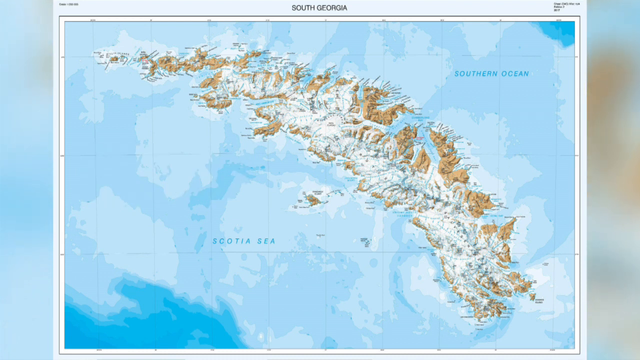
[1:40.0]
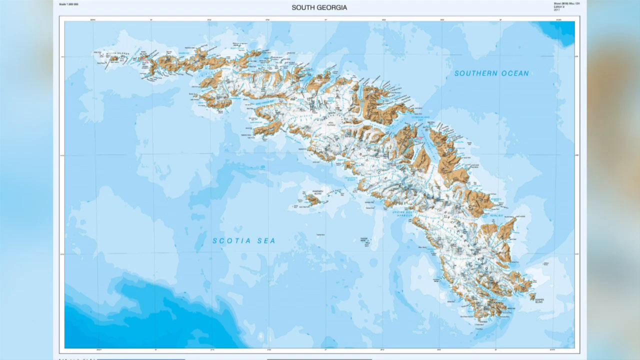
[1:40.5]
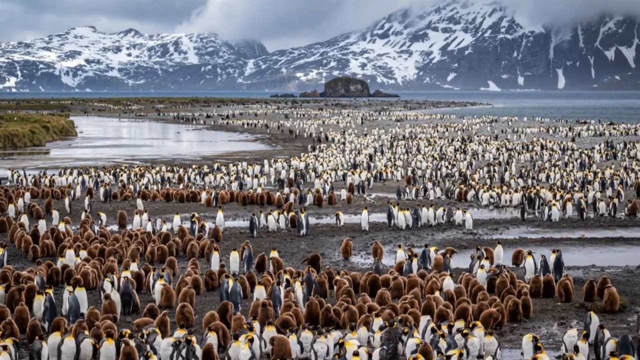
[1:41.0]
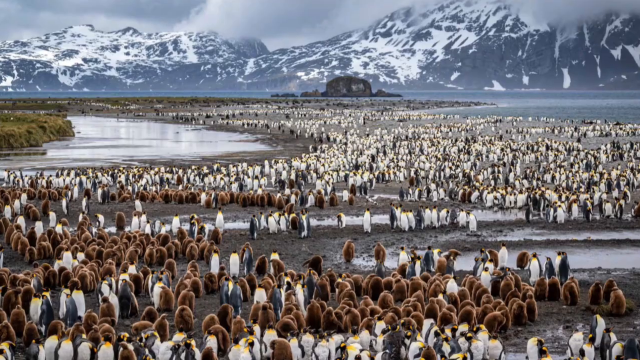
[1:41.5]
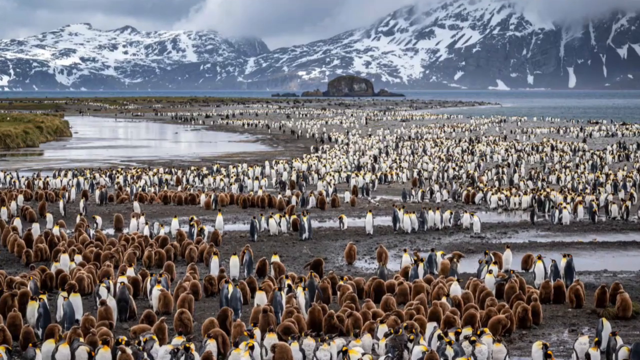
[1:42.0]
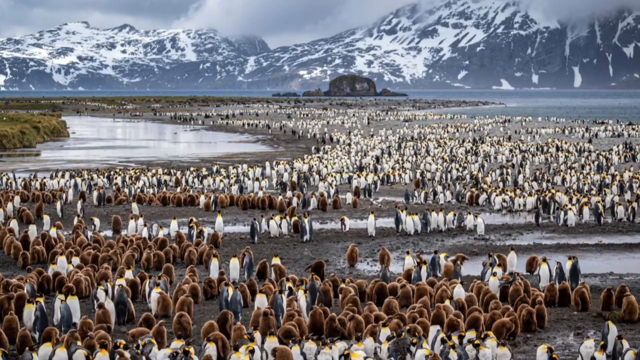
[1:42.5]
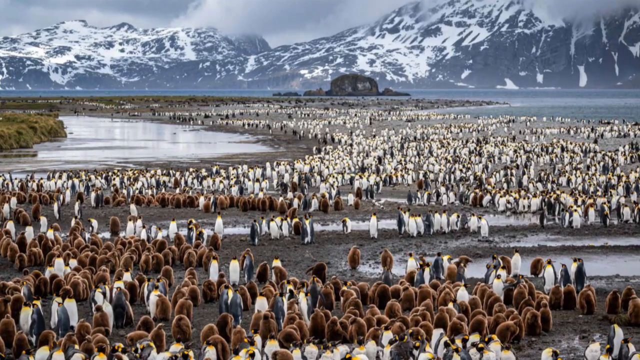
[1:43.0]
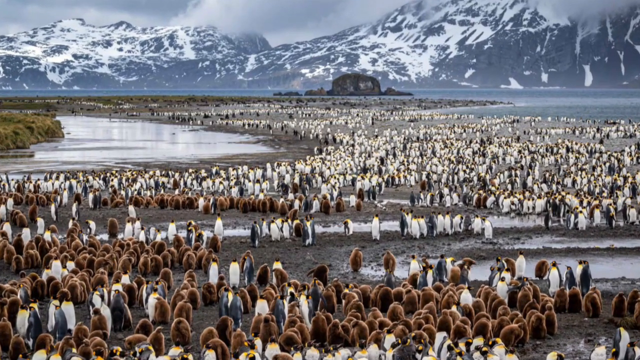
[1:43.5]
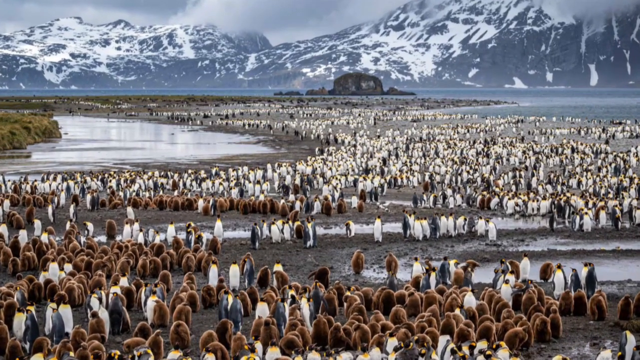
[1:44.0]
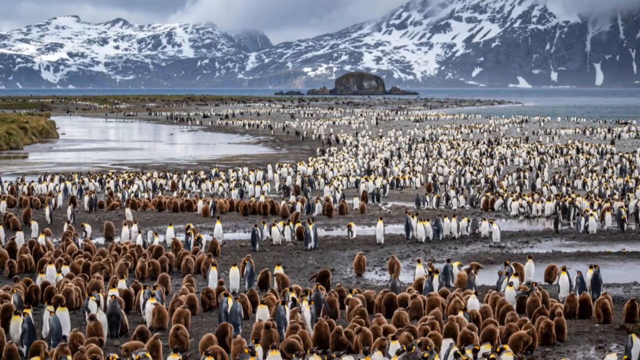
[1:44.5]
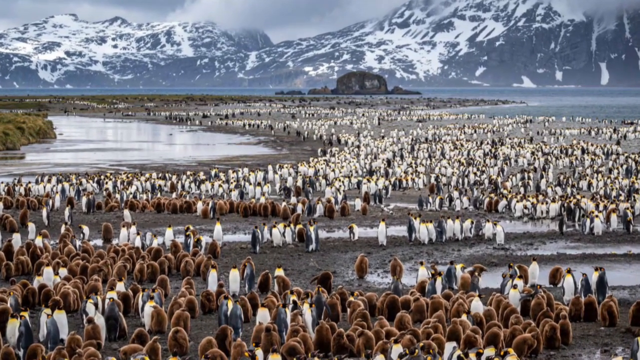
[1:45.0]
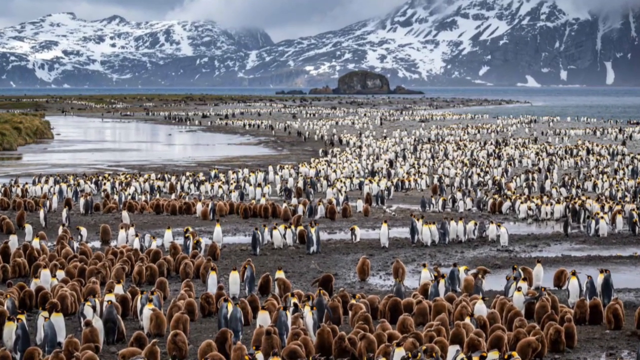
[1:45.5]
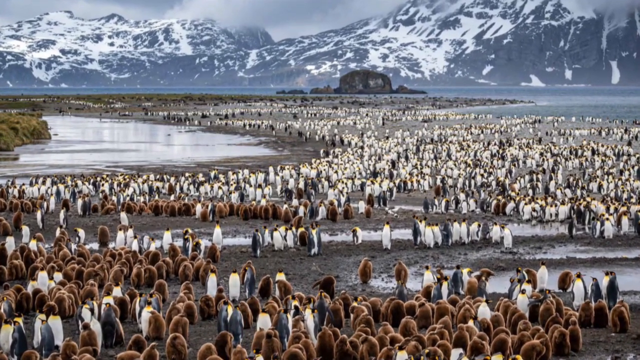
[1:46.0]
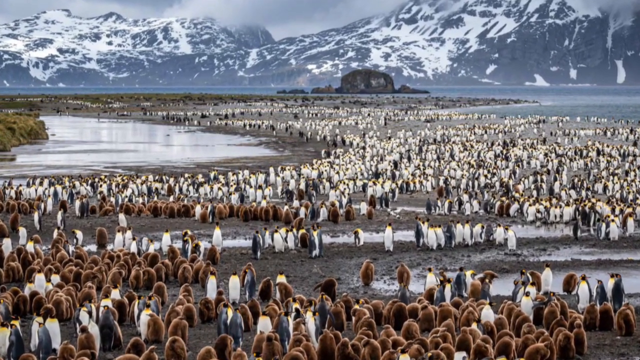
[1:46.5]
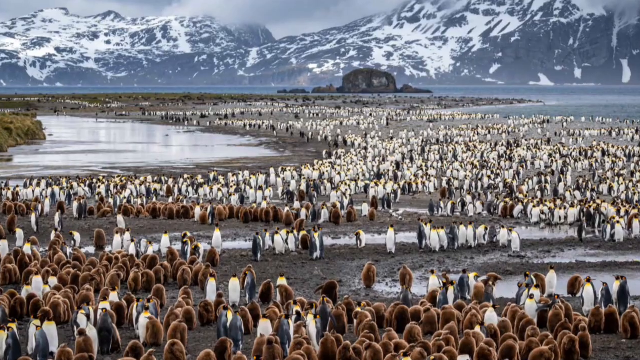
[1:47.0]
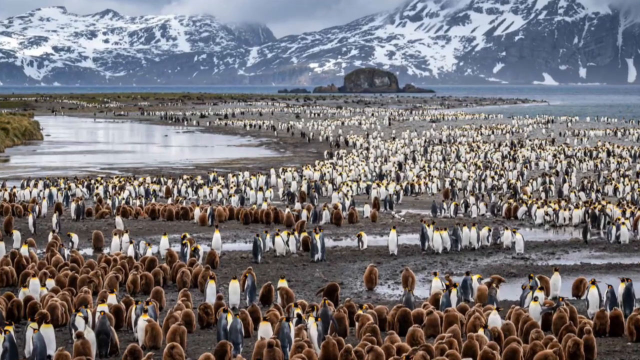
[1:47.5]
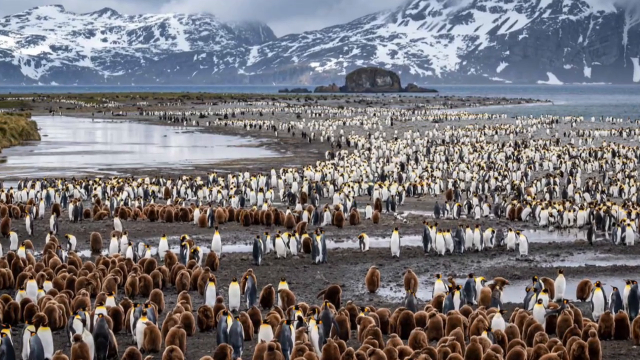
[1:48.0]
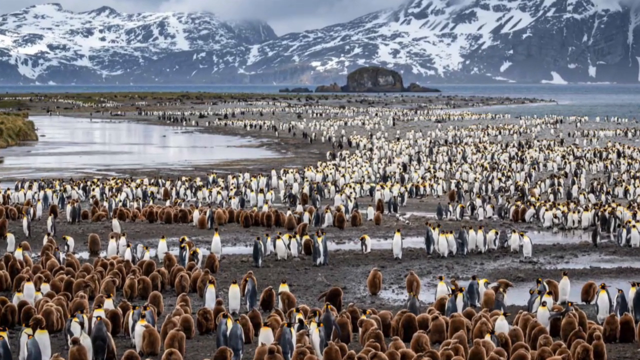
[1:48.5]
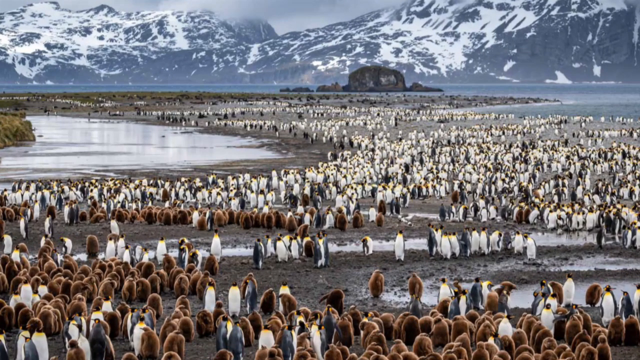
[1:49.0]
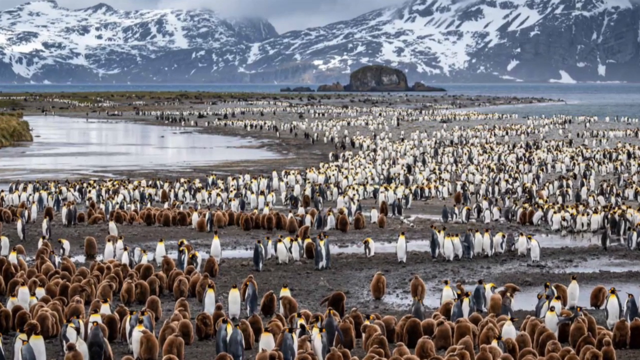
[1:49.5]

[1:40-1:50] An image shows a large group of penguins, apparently hundreds, standing on a large area of land with large puddles of water scattered around. There are snow-covered mountains in the distance, and the weather conditions look very cold. The image changes to several otters lying on small rocks in very lush, green surroundings with lots of greenery. The map titled "South Georgia" appears once again, with the words "Southern Ocean" and "Scotia sea" displayed on it. It is a very large map showing a large area of land surrounded by a large area of sea coloured blue.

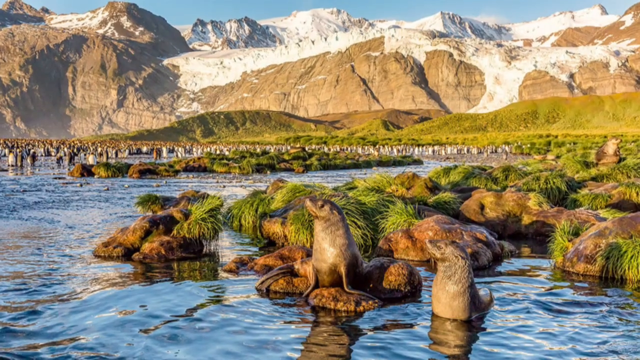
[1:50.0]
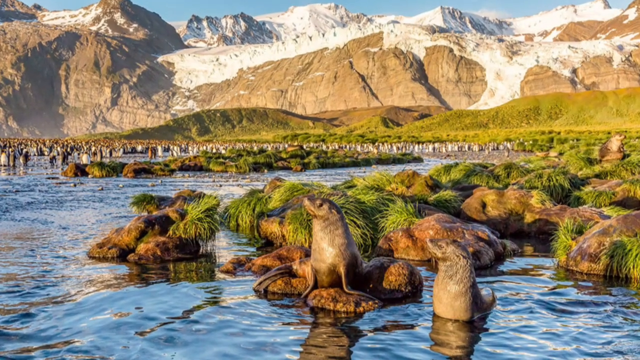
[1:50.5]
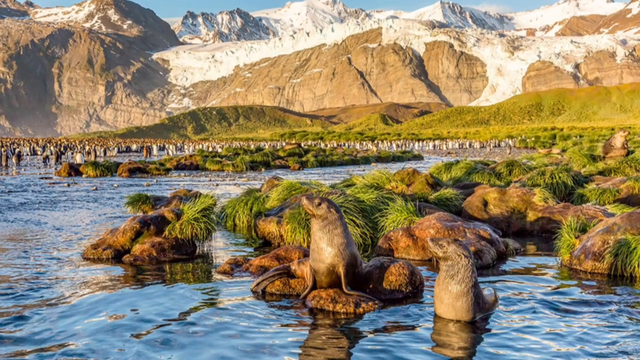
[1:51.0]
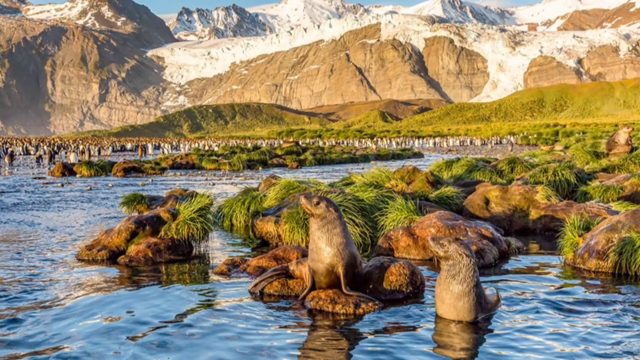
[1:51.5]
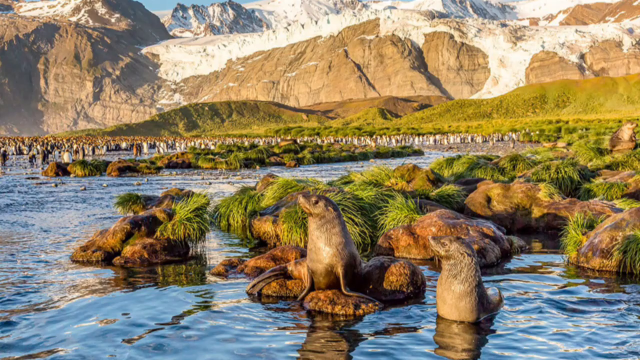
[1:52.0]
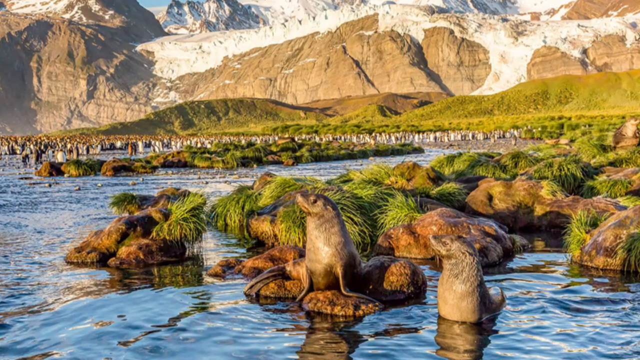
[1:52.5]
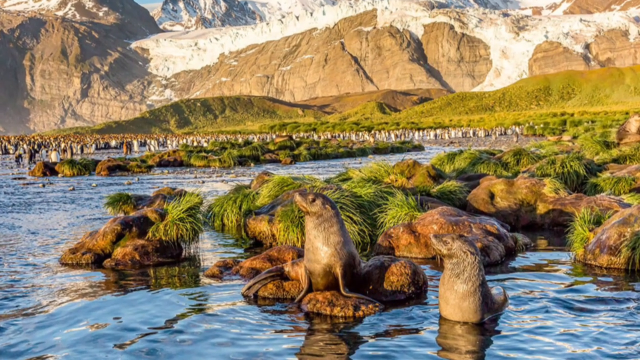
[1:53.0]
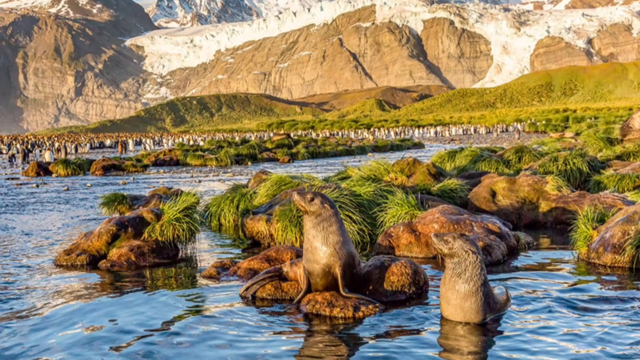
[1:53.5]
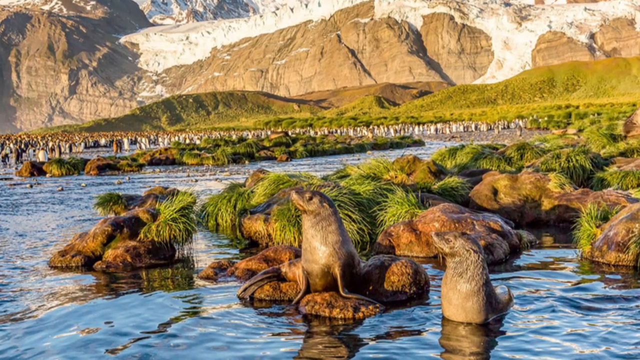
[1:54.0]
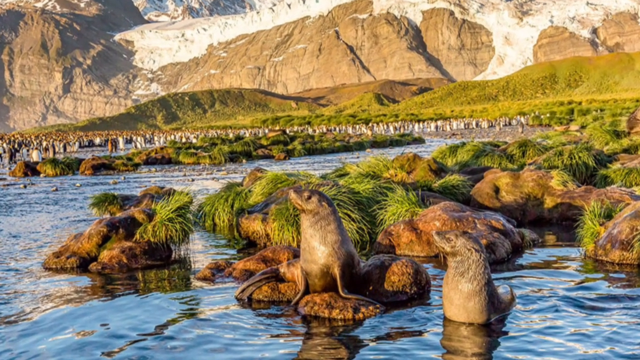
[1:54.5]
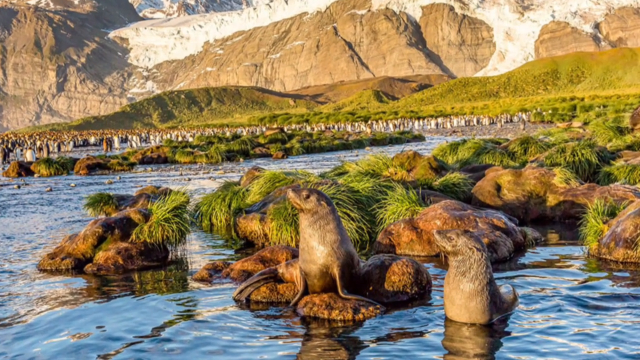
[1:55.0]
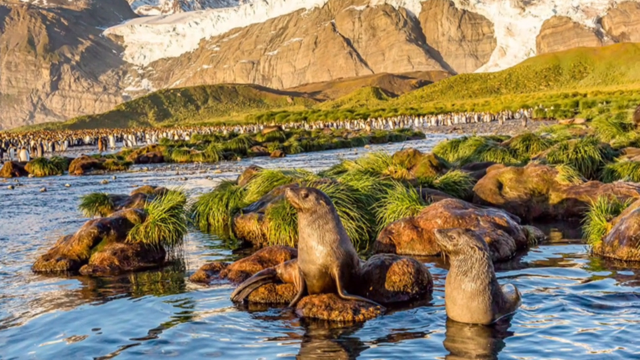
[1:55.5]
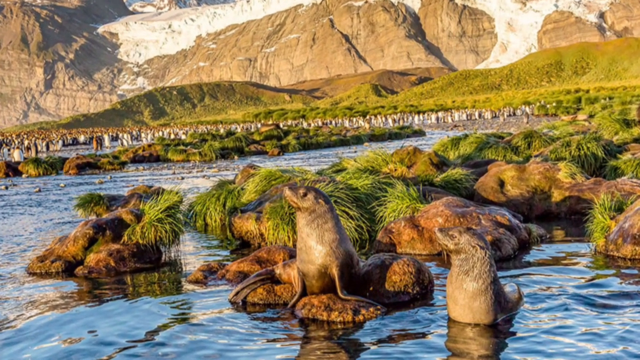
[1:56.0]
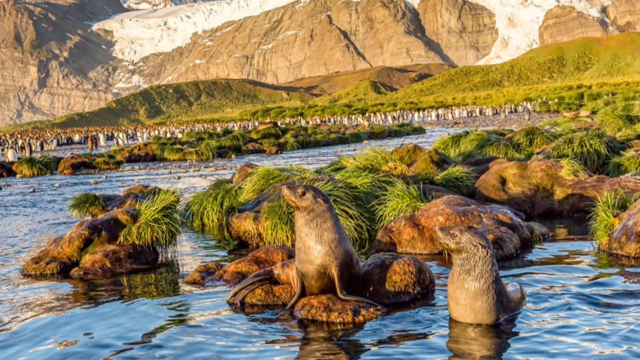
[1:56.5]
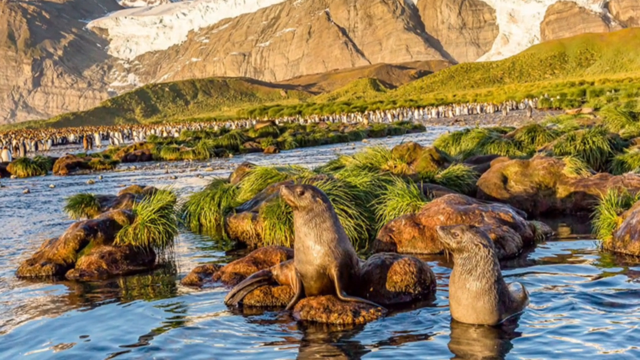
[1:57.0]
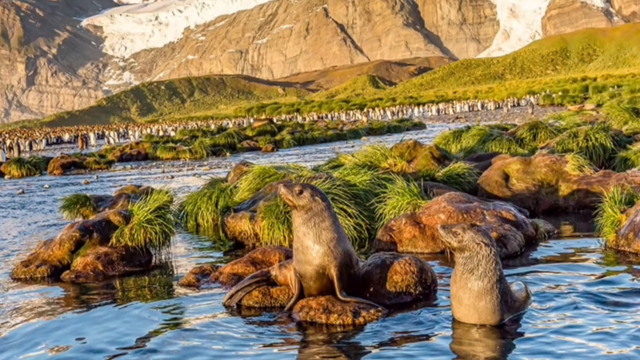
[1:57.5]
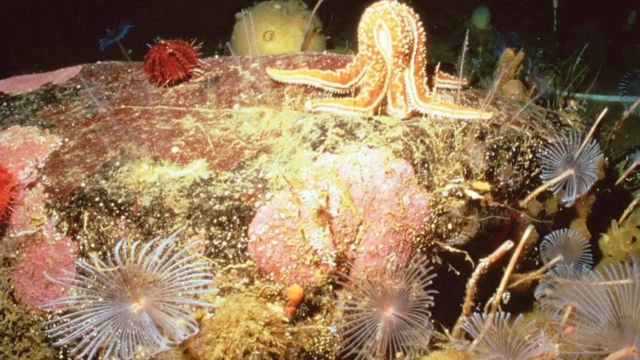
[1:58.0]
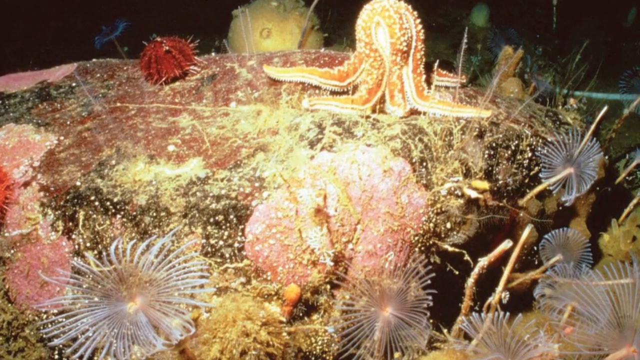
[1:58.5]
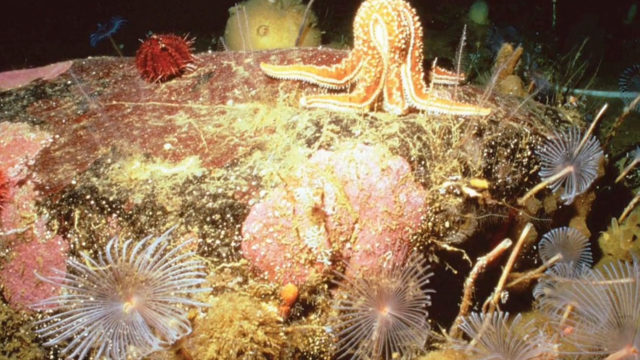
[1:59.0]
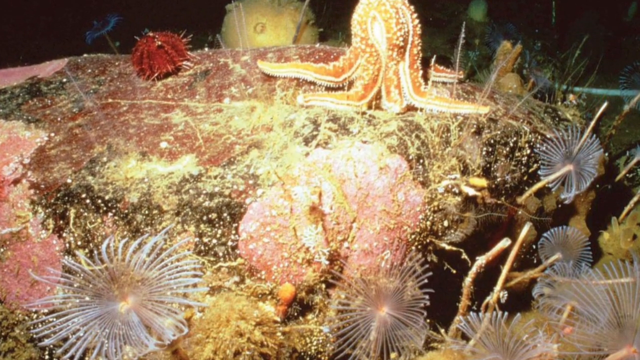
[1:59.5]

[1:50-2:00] The image of the otters sitting on rocks continues. The rocks are in an area of water and are covered in grass and other vegetation. There are green hills in the distance, and beyond them several large, rocky, snow-covered mountains. The next image shows a scene of sea creatures. A large octopus in the background sits upon vegetation lying on the sea bottom. Several other sea creatures are in the image, including what appear to be jellyfish, a small round red creature with small white tentacles covering its body, and several creatures with long white tentacles in a fan-like shape and two longer white tentacles emerging from the centre of the body.